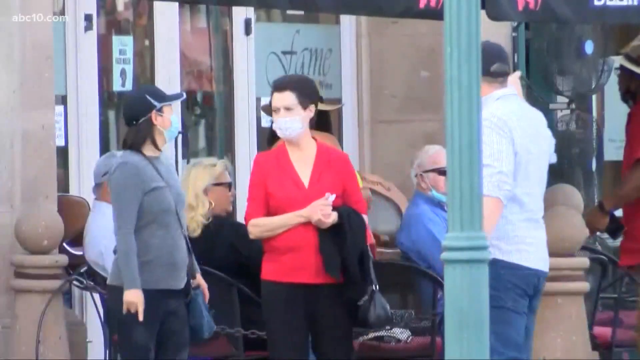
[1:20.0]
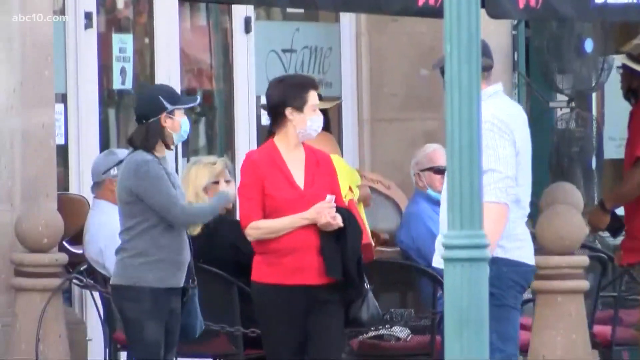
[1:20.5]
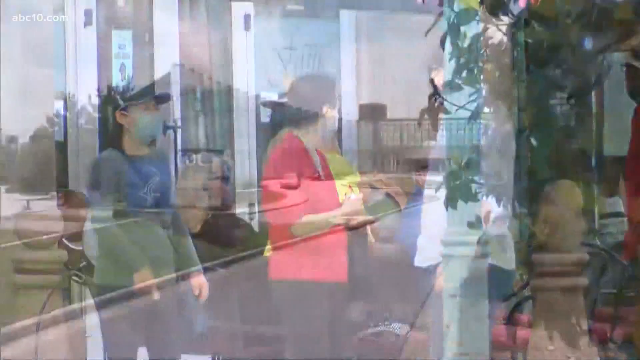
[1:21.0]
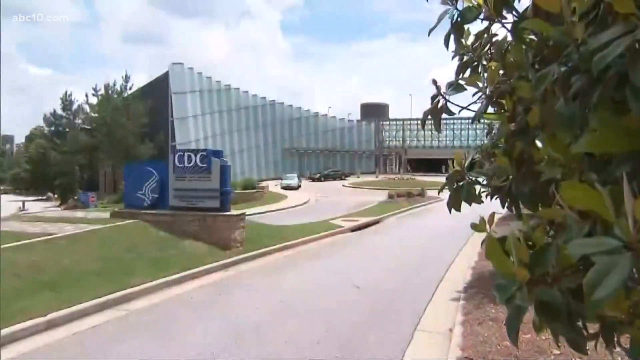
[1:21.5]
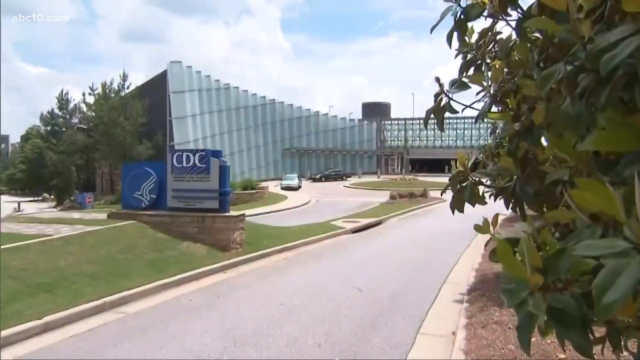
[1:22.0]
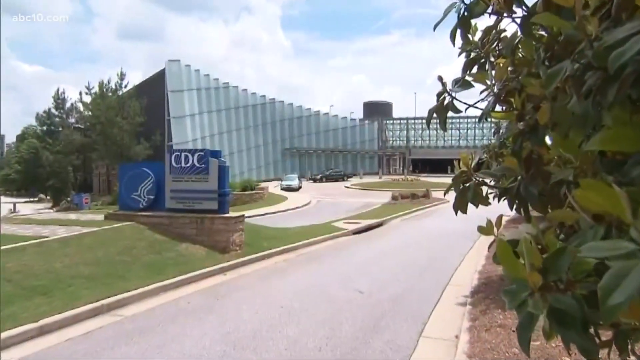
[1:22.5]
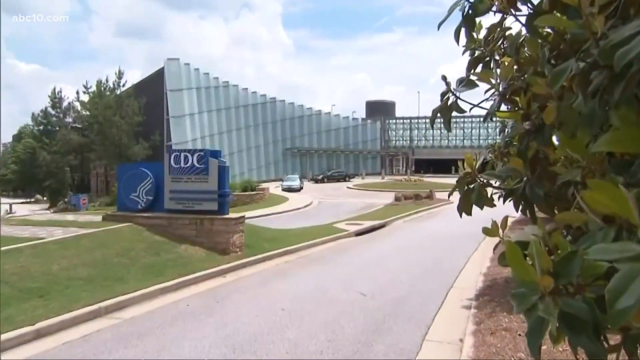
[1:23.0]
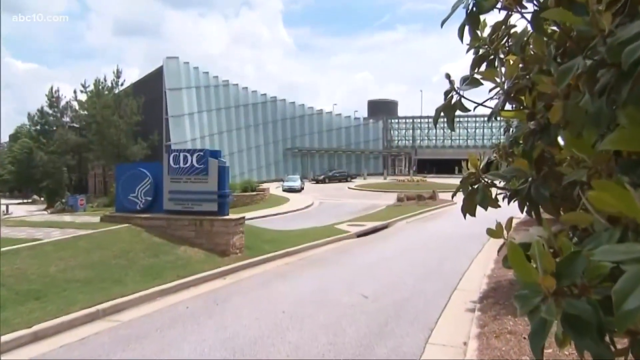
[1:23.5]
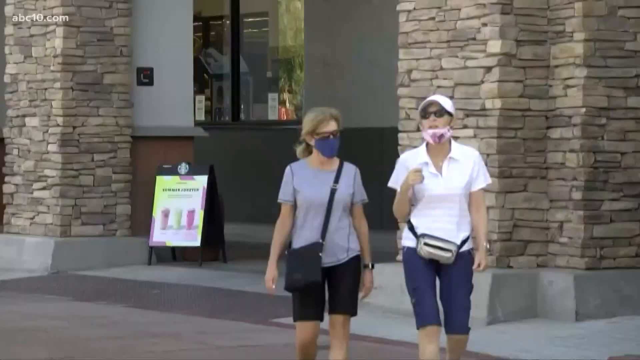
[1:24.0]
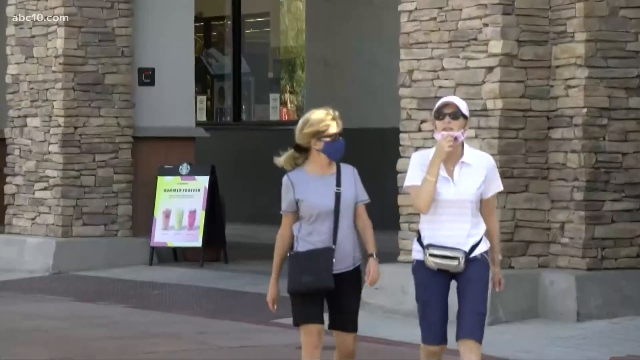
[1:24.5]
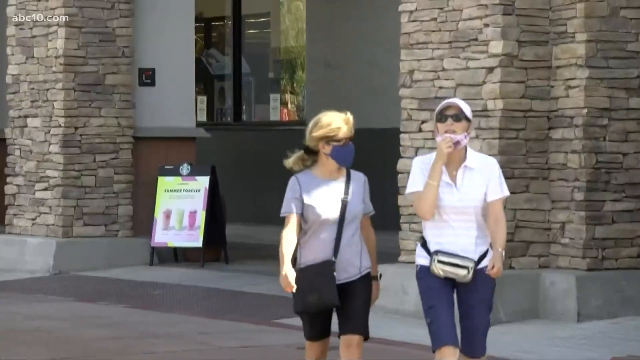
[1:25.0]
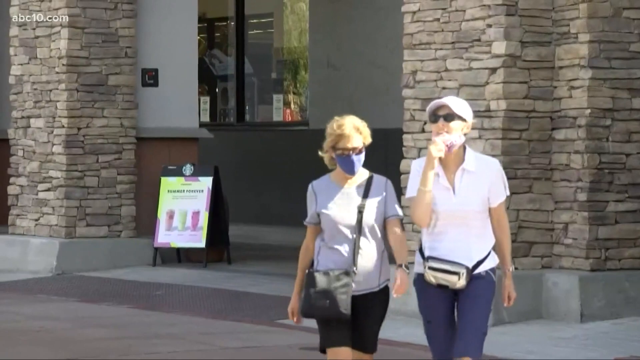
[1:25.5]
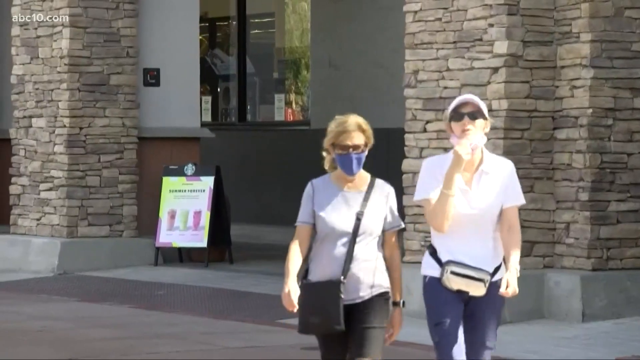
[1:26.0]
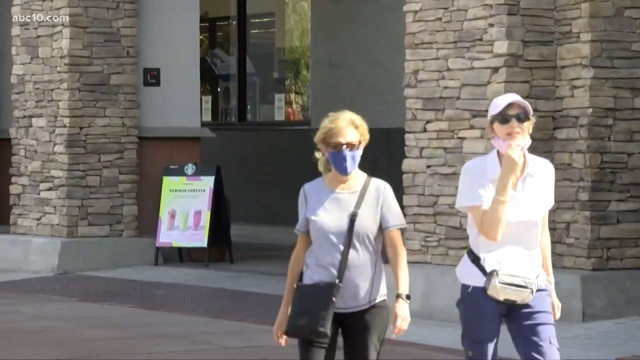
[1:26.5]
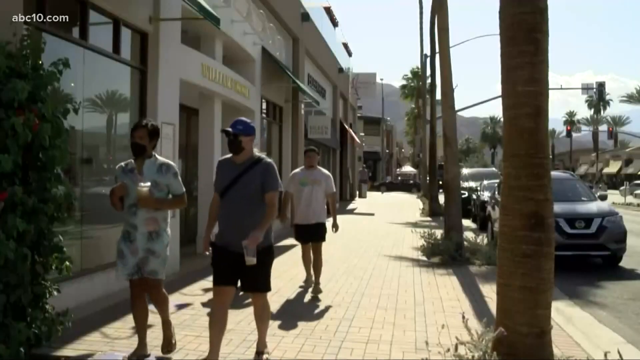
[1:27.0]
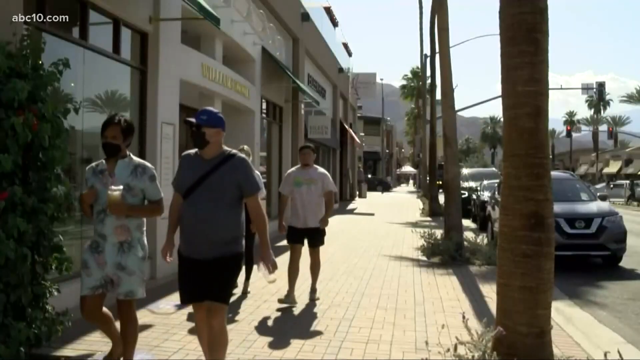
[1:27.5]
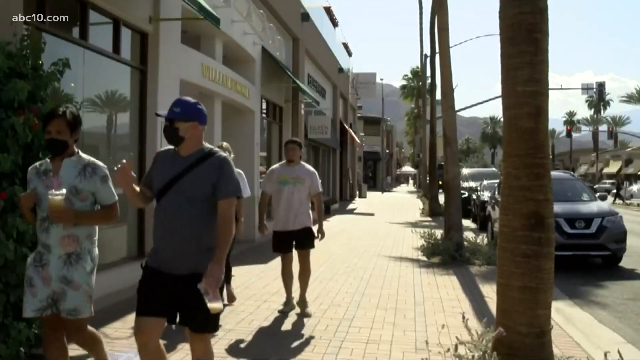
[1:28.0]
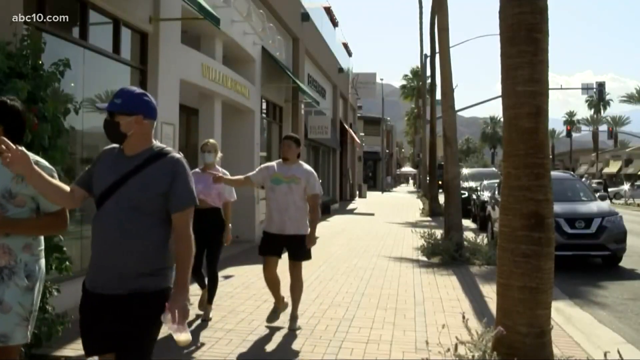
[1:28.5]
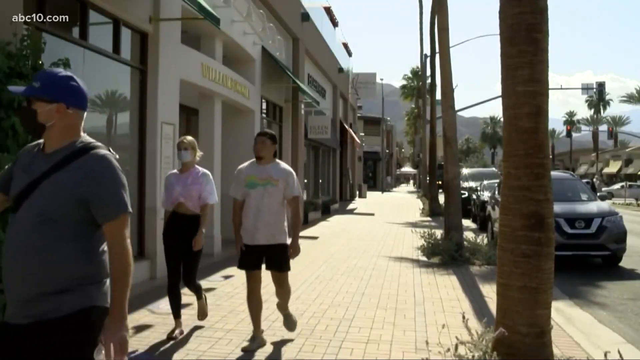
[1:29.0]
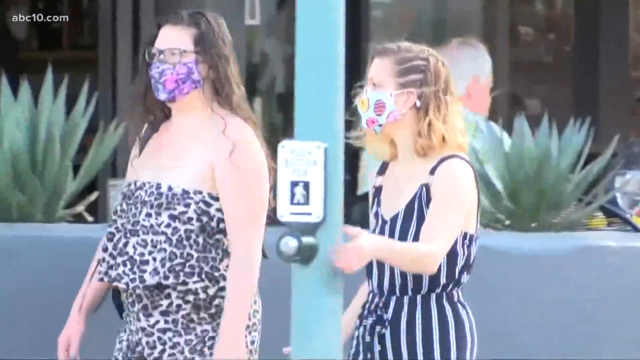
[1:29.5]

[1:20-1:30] Several men and women are outside a store, most of them wearing masks, while one lady is sitting without a mask. The next shot shows the front of the Centers for Disease Control building, with a sign that says "CDC" and two cars parked in front. Then the outside of a Starbucks appears, where two women wearing masks, sunglasses and purses walk away from the building; a Starbucks sign is on the ground in front of the window. Another shot shows other people walking down the street: two of them have masks on, and behind them one person has a mask on while one does not.